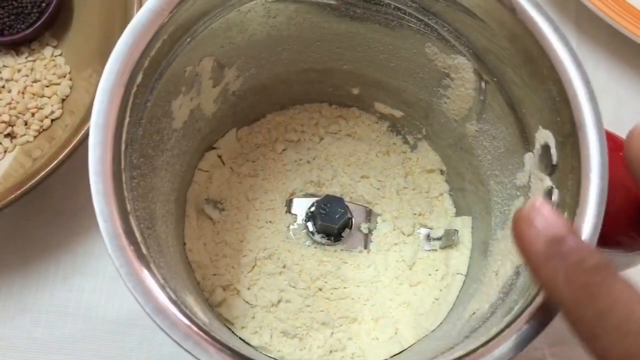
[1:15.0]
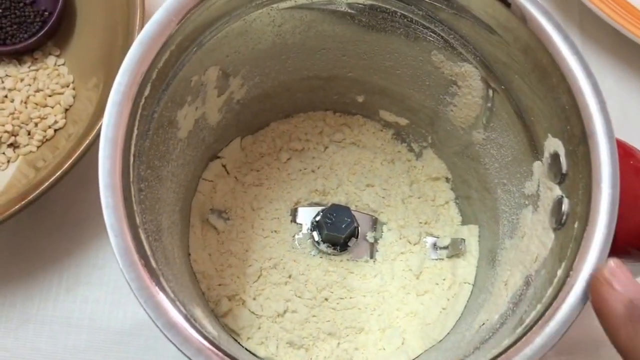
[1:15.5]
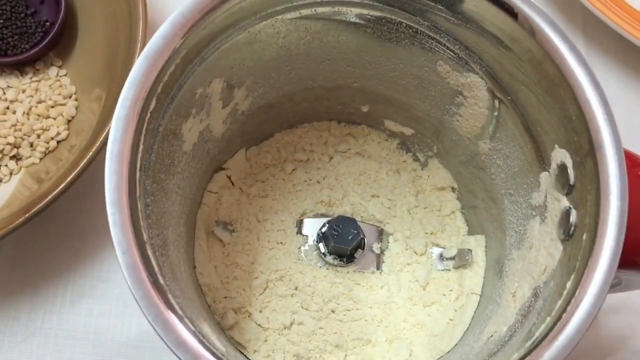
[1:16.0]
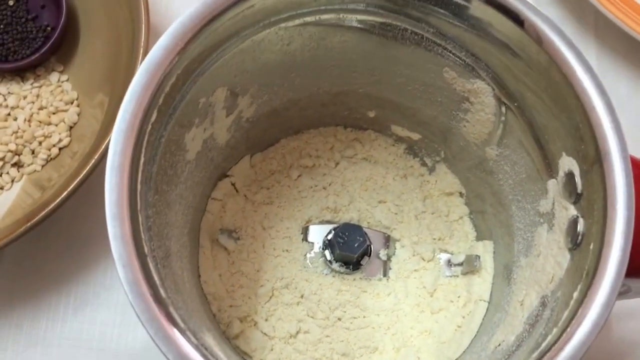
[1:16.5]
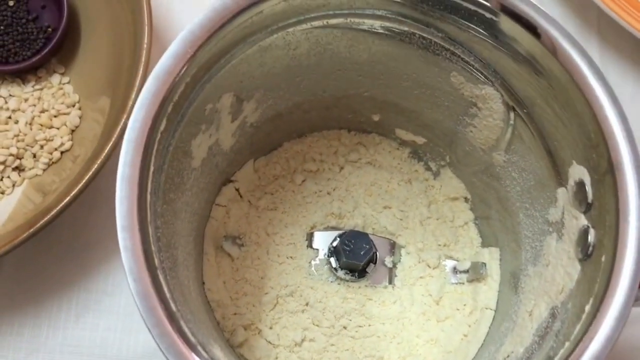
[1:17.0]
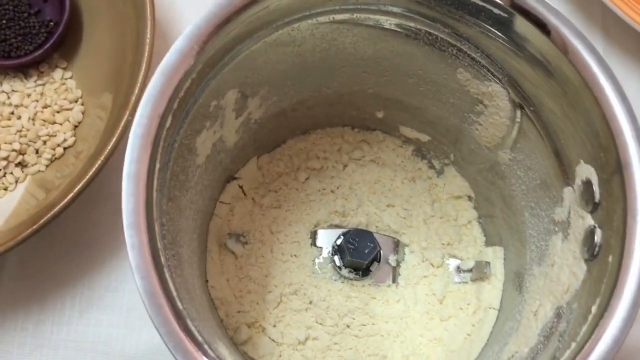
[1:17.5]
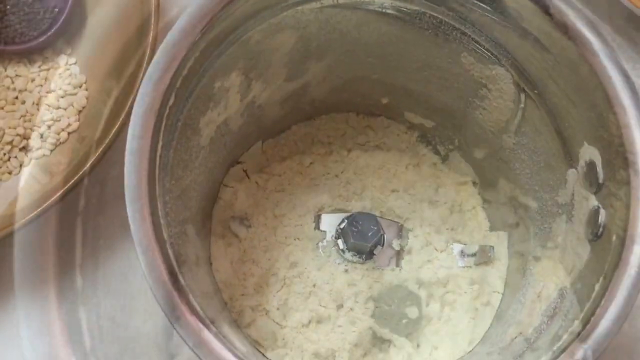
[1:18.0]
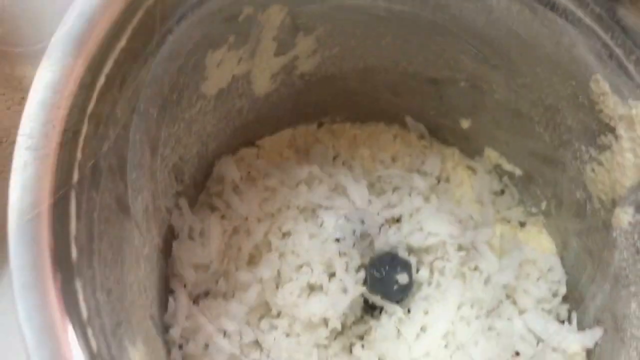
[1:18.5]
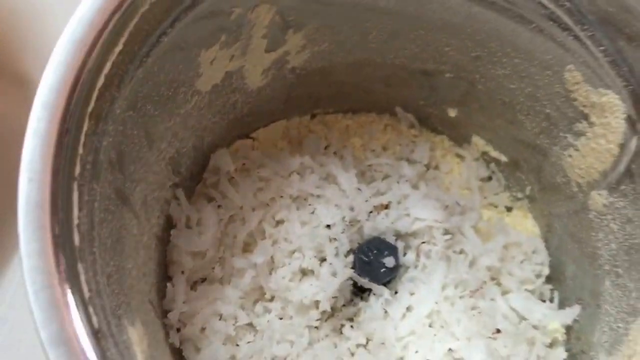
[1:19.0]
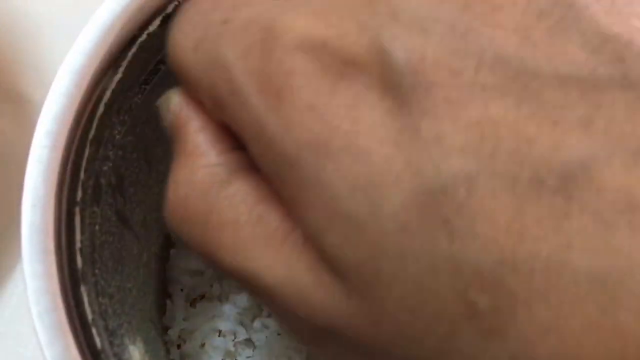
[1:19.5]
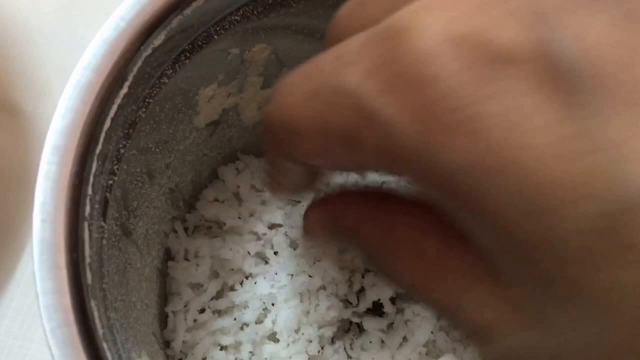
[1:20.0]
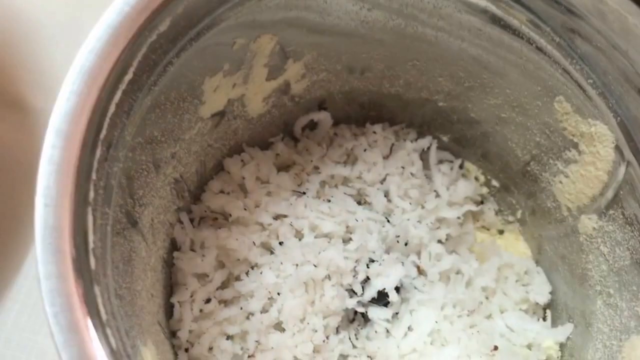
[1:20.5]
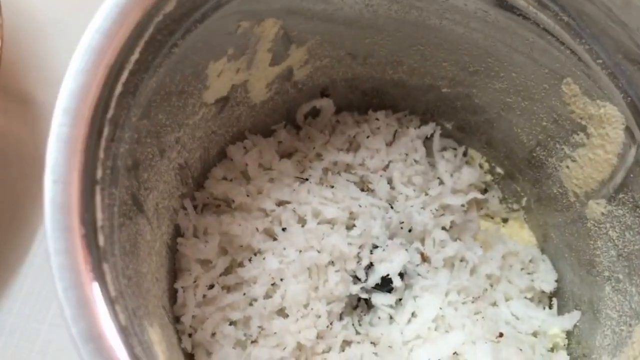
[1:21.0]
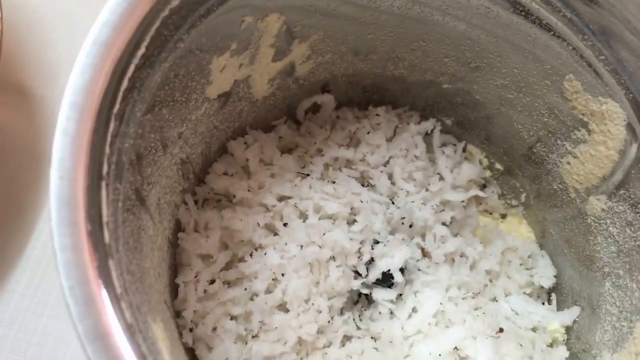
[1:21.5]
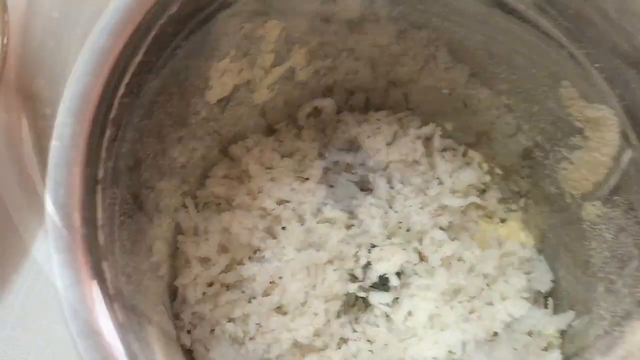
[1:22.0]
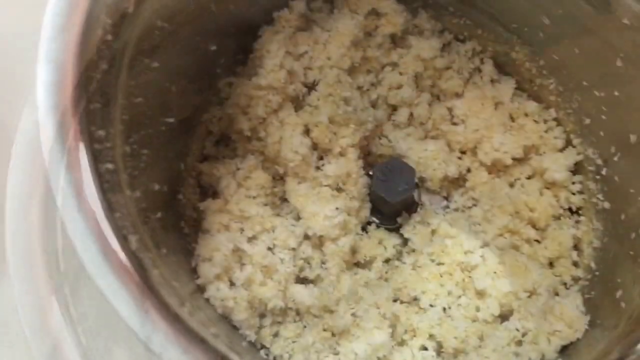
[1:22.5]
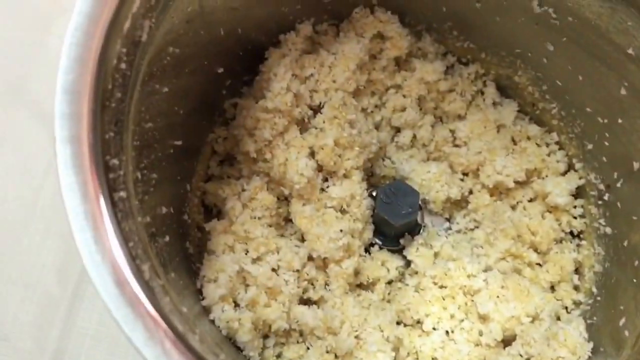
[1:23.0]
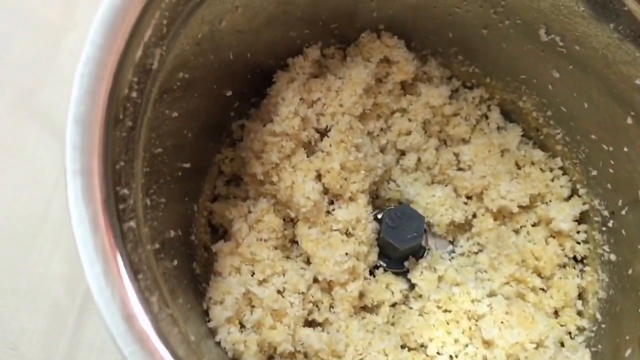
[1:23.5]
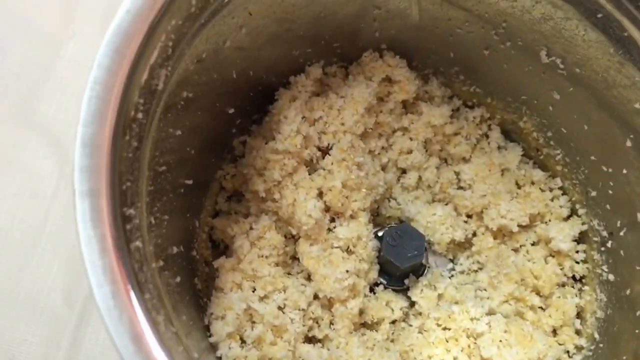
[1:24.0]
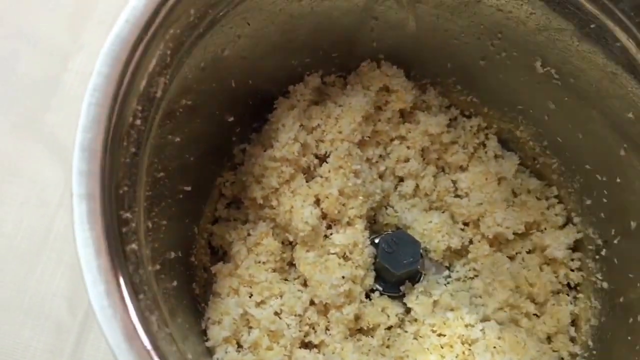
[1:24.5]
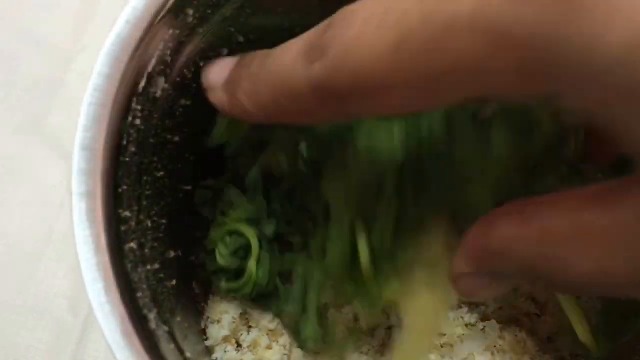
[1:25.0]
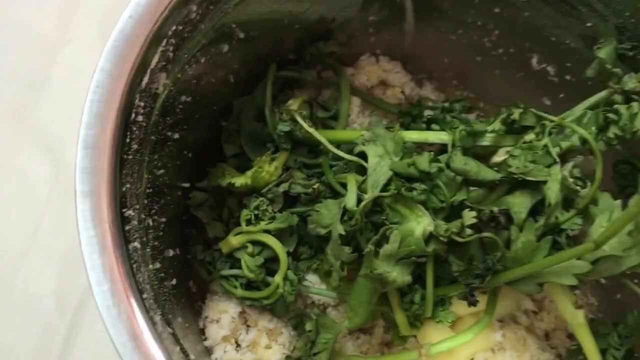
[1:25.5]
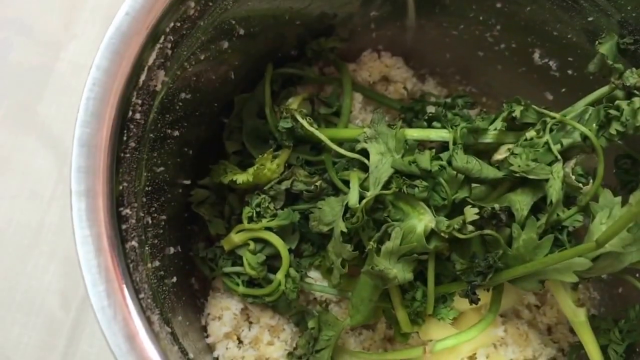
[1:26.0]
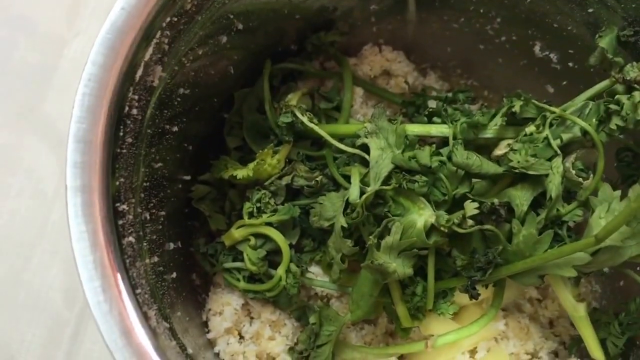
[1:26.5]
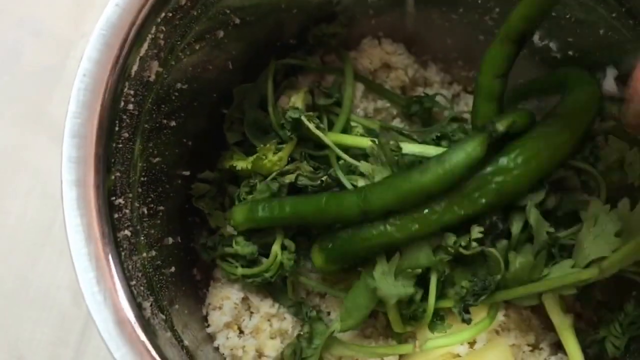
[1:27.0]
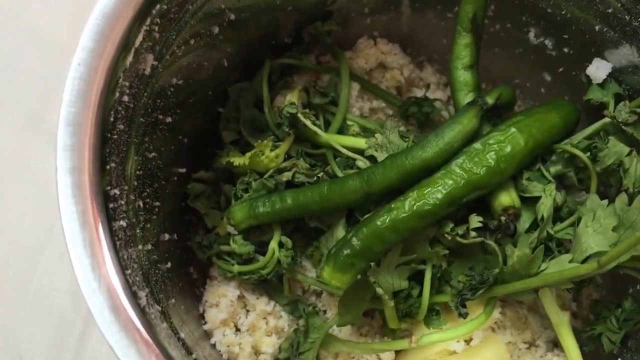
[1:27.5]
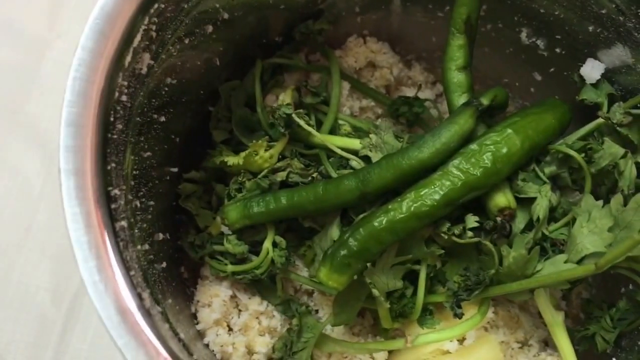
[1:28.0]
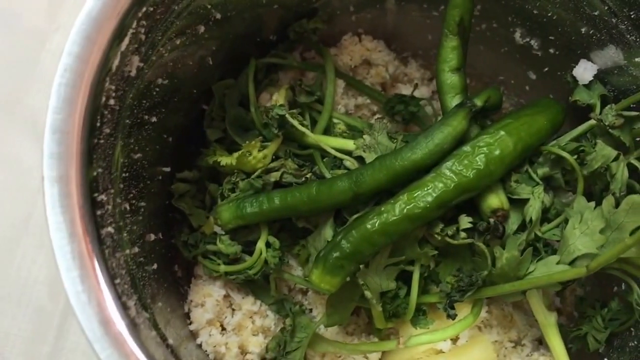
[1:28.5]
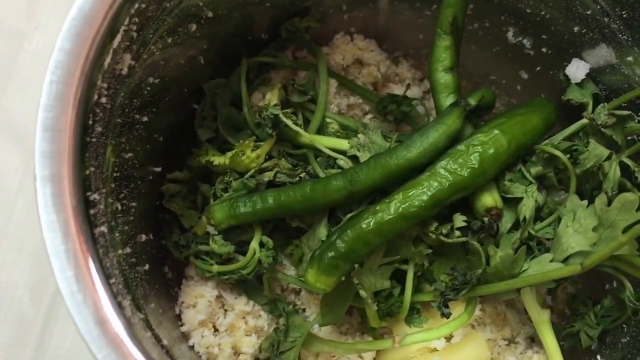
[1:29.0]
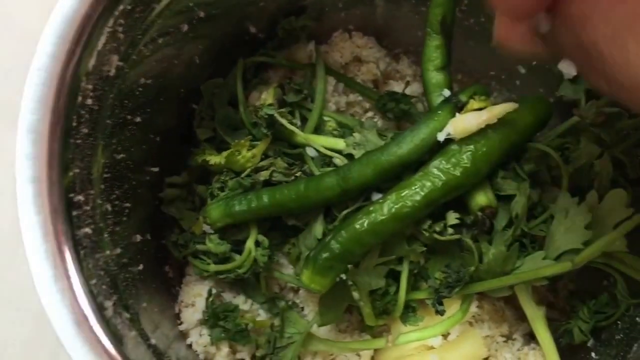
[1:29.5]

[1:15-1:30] The ingredients appear to be going into a food processor. One unidentified ingredient that looks like flour is already in the food processor. The shredded coconut is added, followed by what looks like possibly cilantro, two or three green beans, and then what may be fresh ginger, though it is hard to tell. To the left there are what may be dried lentils.